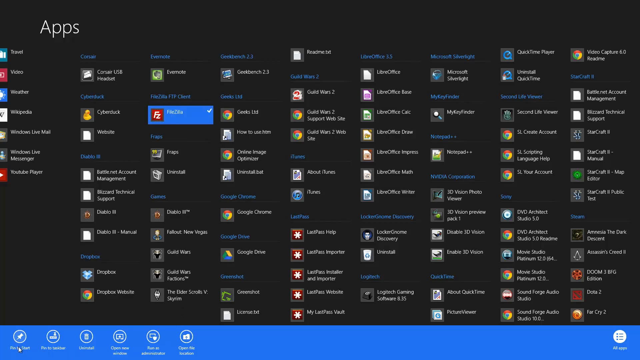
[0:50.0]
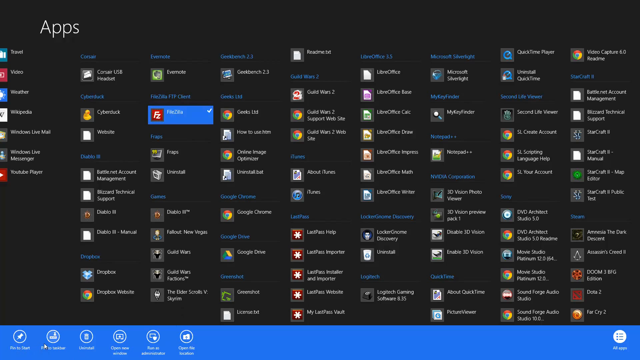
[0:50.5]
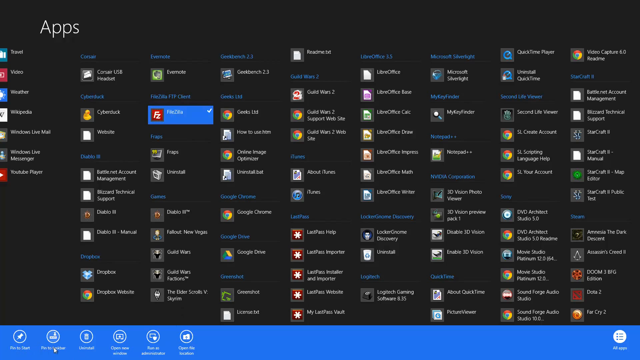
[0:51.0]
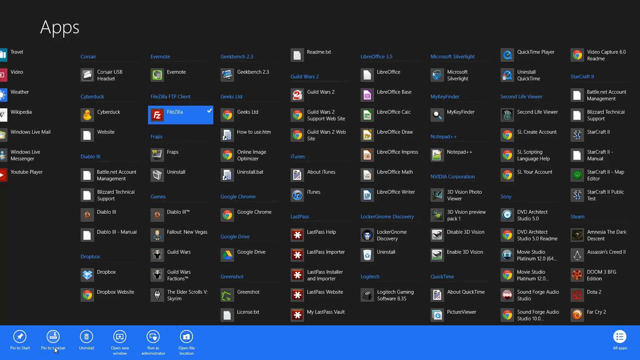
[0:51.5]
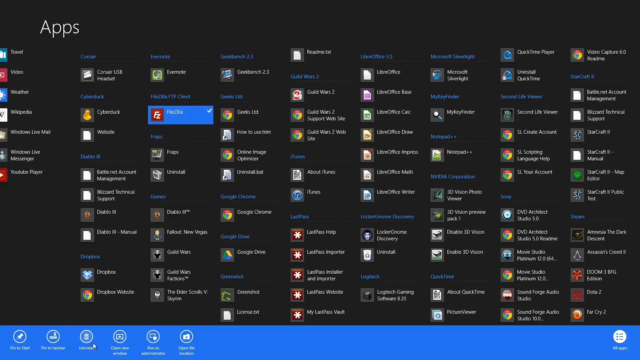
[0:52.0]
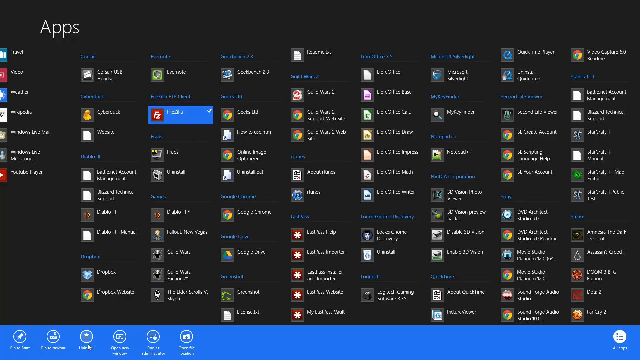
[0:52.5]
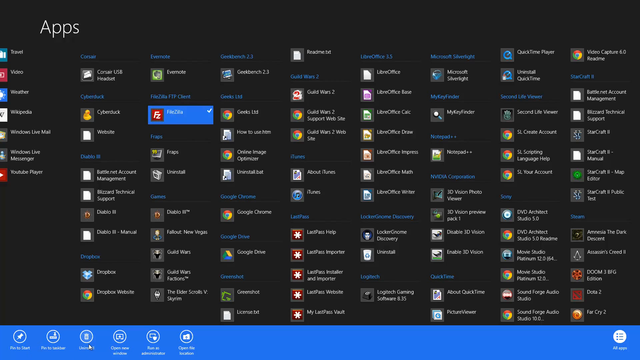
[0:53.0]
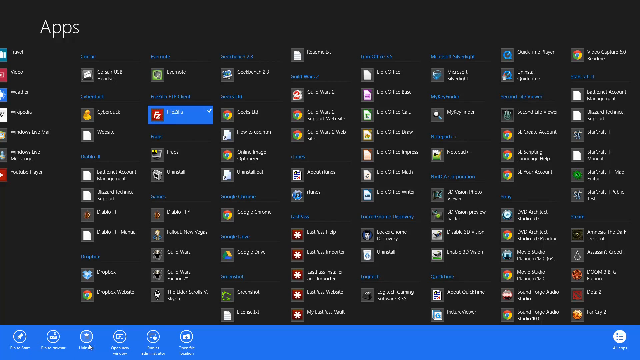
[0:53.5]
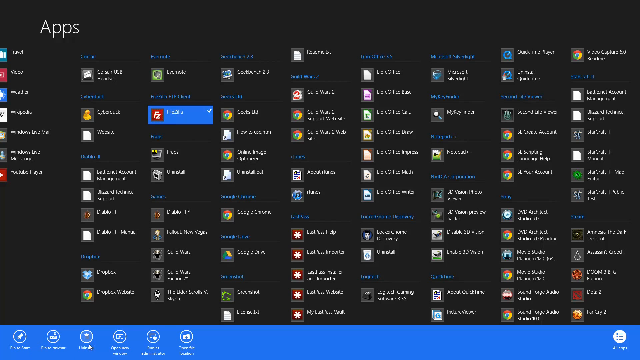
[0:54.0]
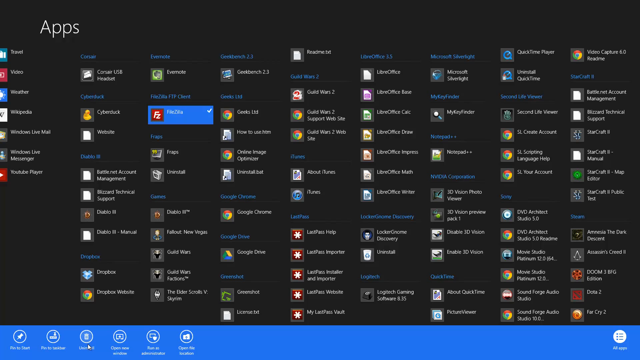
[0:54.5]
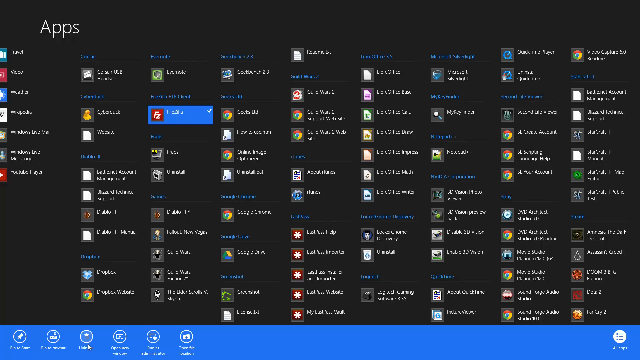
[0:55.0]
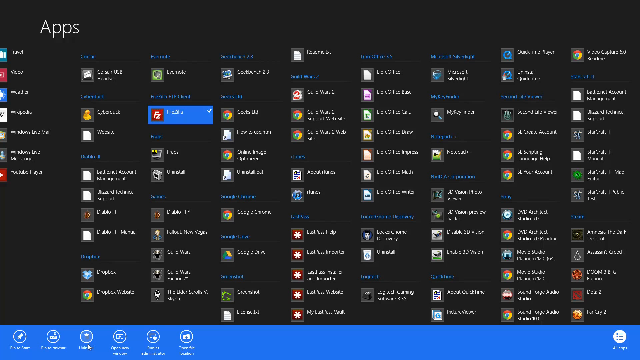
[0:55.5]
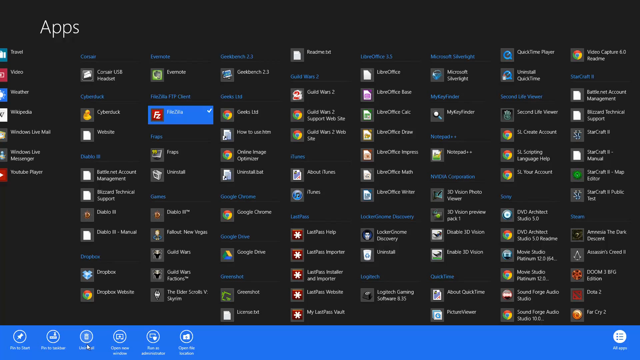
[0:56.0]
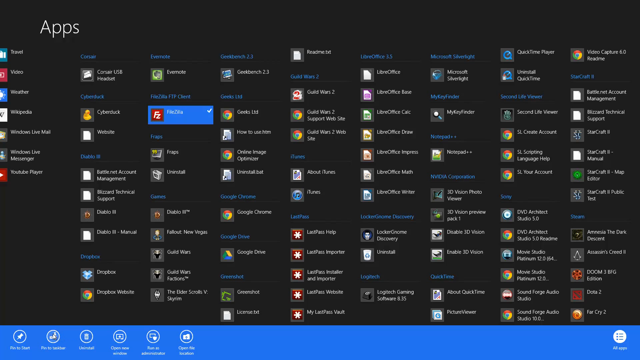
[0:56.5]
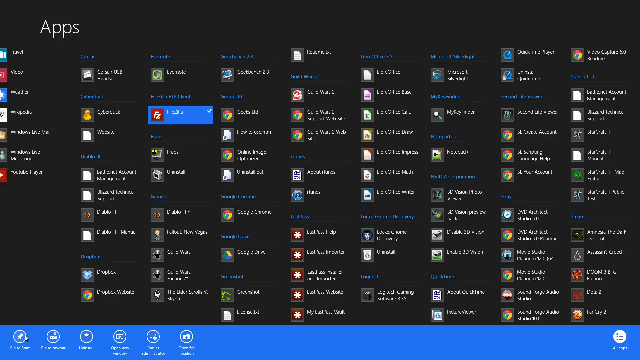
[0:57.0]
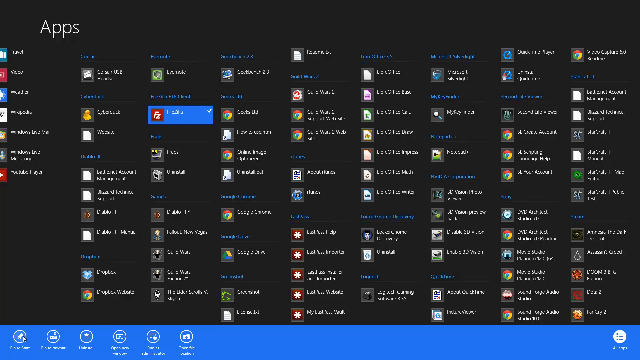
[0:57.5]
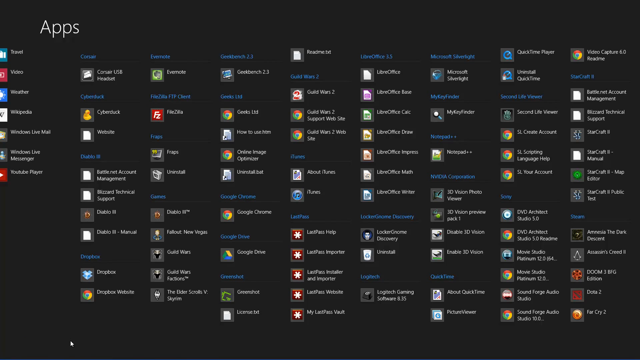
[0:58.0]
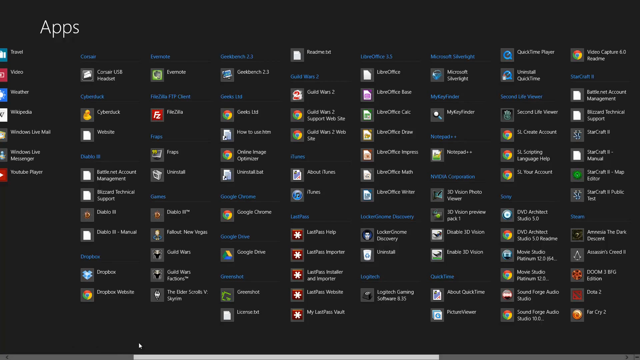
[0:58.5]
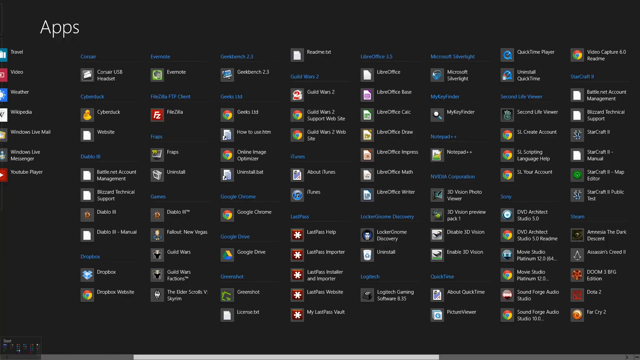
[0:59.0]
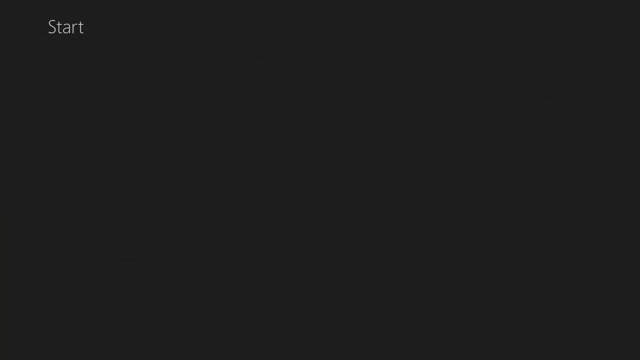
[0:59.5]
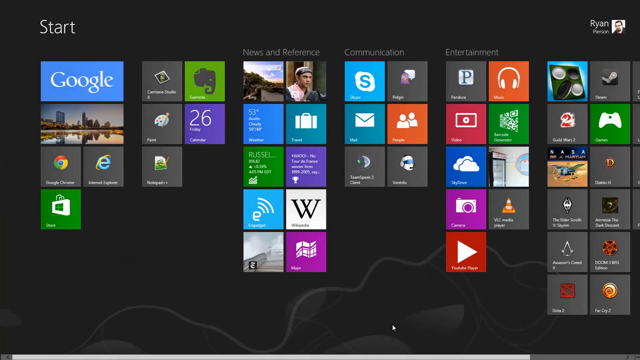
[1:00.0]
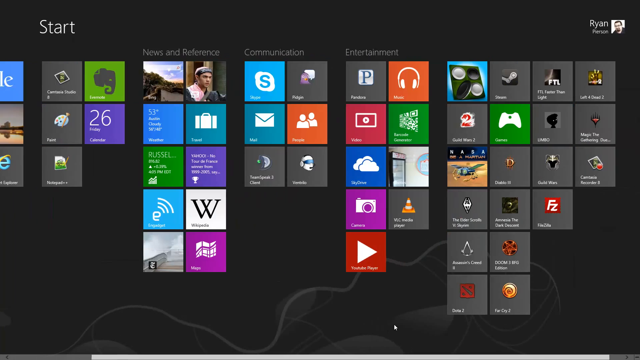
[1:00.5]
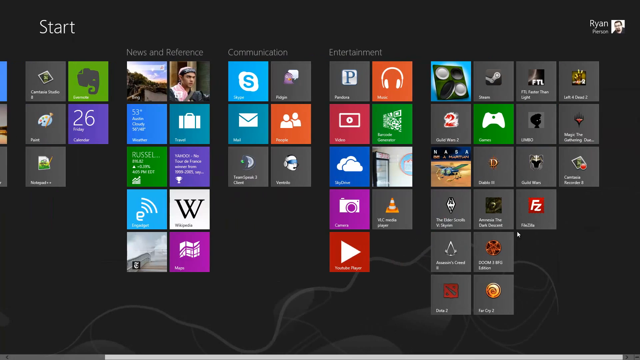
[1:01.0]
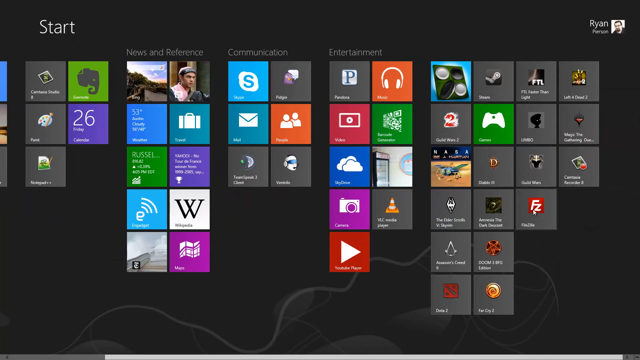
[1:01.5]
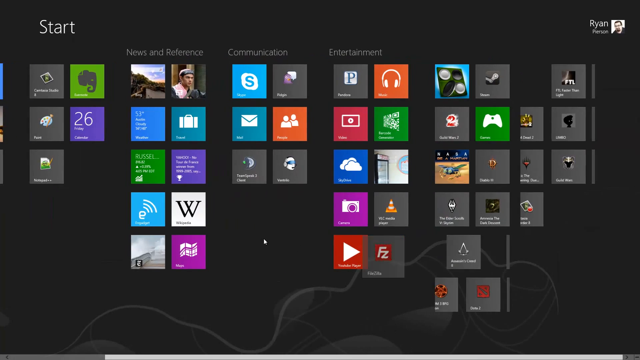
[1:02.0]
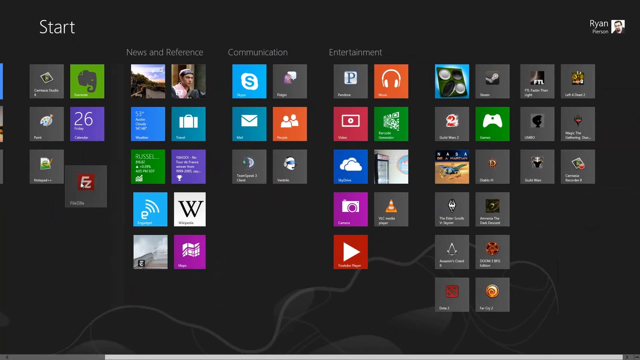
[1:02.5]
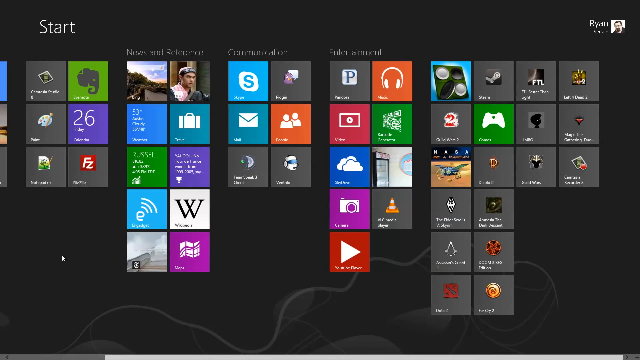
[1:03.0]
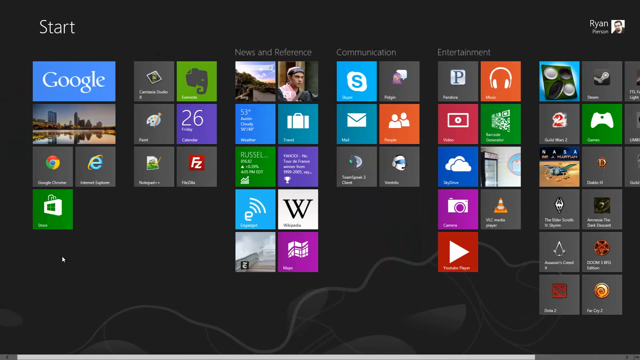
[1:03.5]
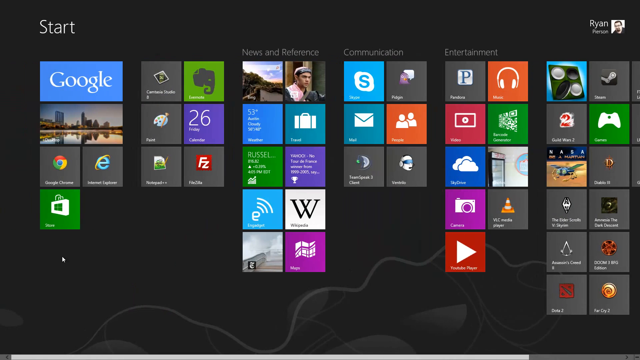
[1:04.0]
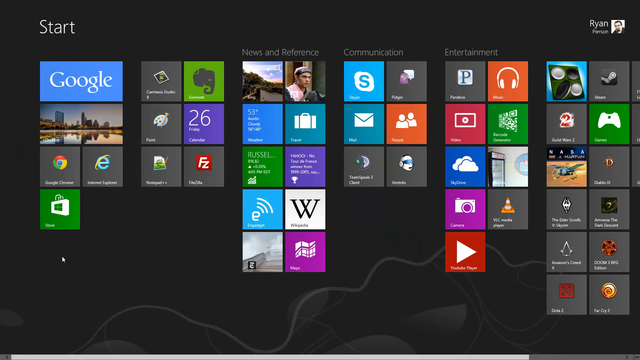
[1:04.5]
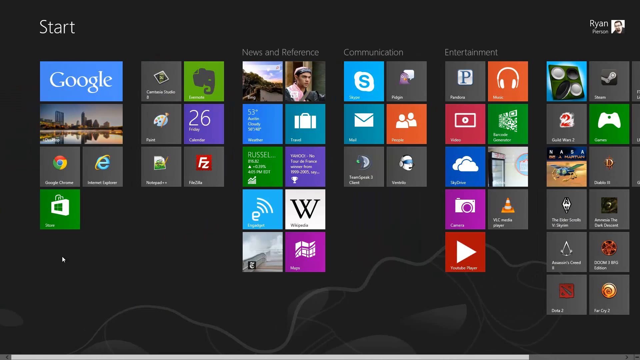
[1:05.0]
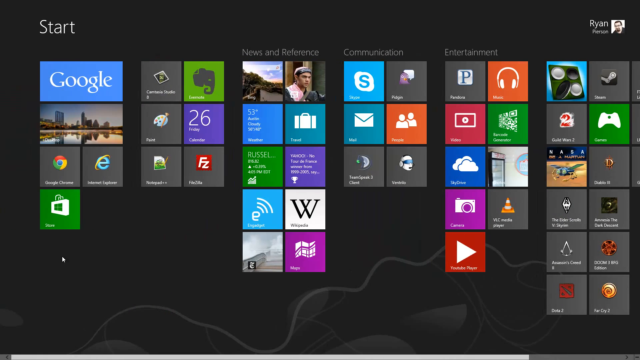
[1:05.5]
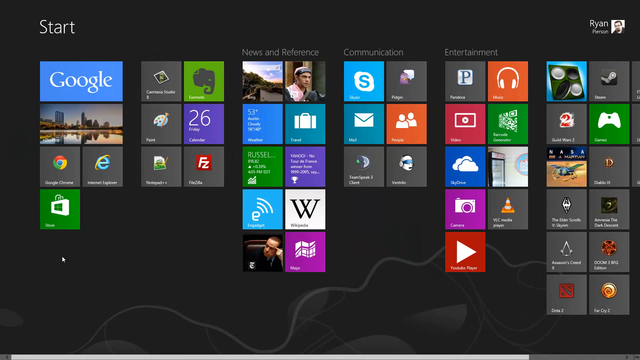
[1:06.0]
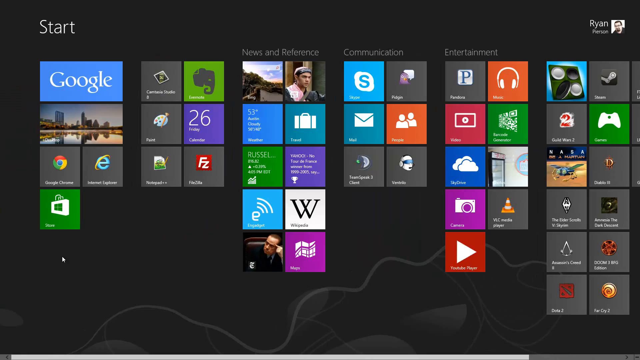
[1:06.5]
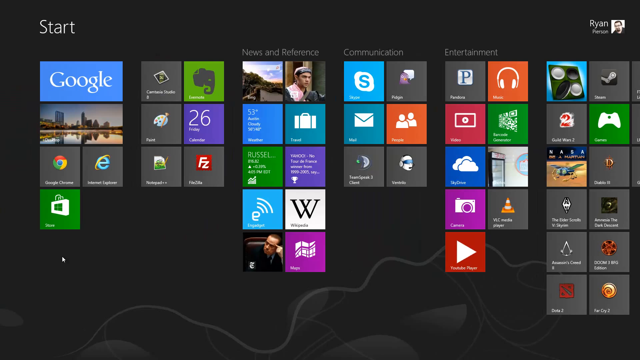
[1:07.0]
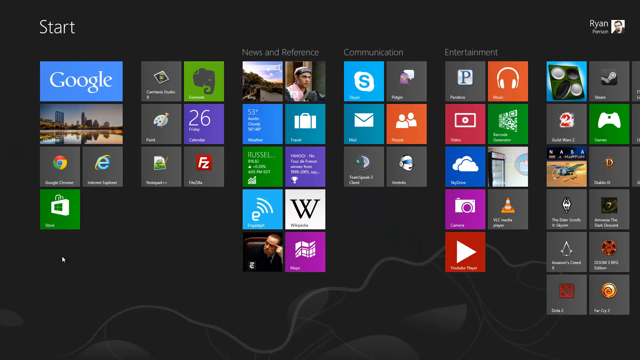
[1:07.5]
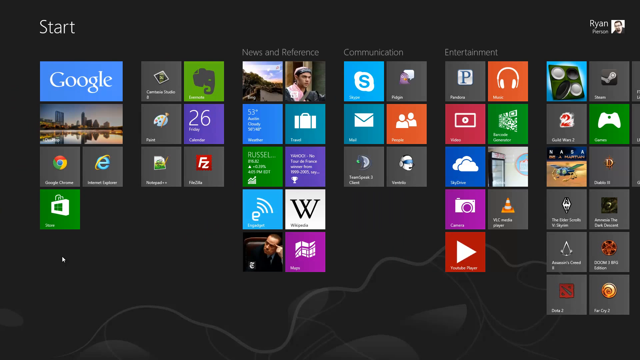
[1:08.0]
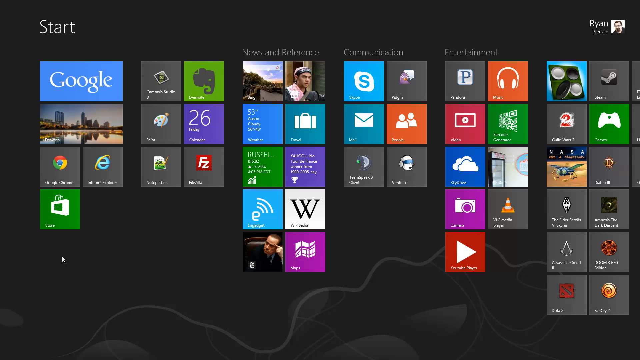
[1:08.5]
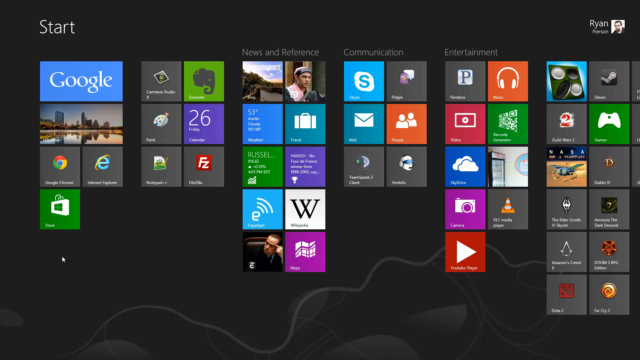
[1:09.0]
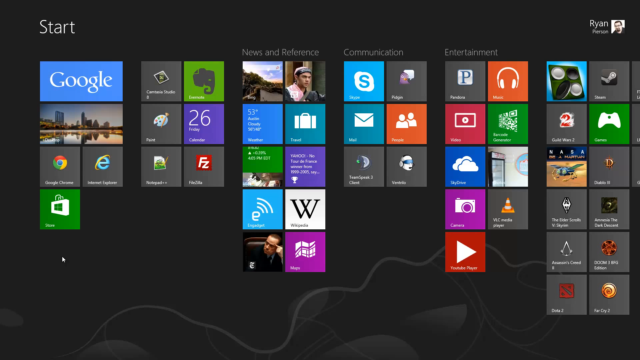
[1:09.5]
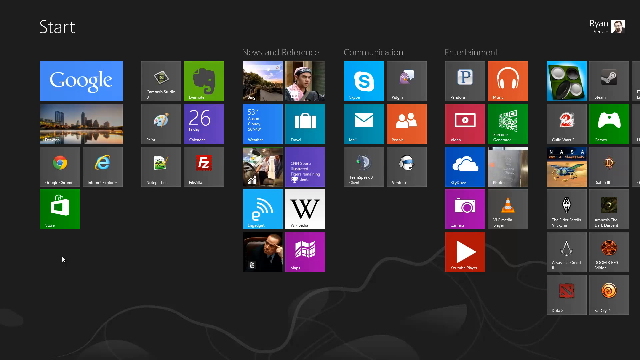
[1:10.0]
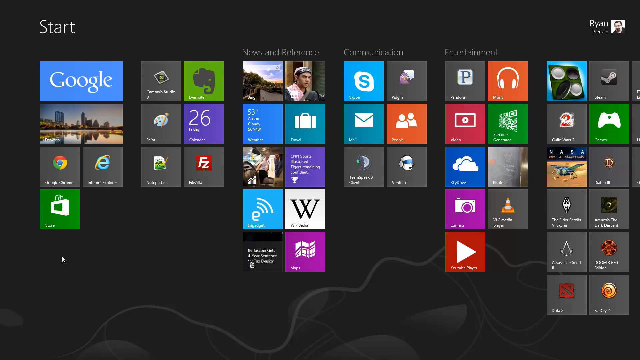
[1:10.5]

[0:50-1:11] The app screen shows the FileZilla app highlighted blue with a tick in its top right corner, among a huge number of different apps on a black background. A blue bar is at the bottom of the screen; then the app is unselected, and the bar disappears along with the blue highlight on the app. The user goes back to the Start screen, which has a black background with the different apps, and scrolls to the right. He drags the FileZilla app all the way from the right-hand side of the start screen to the left-hand side, placing it in the second section of the left-hand side, and then scrolls back.